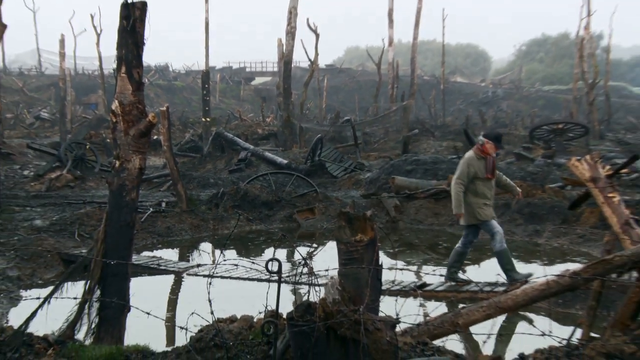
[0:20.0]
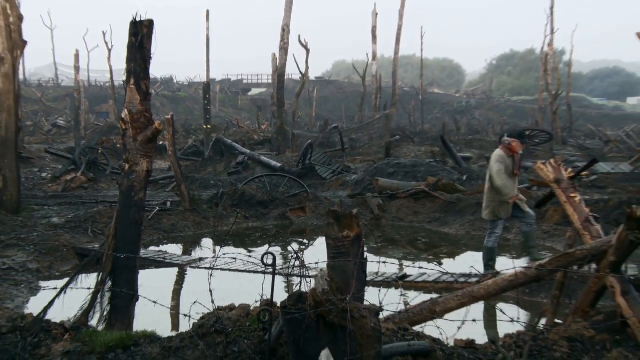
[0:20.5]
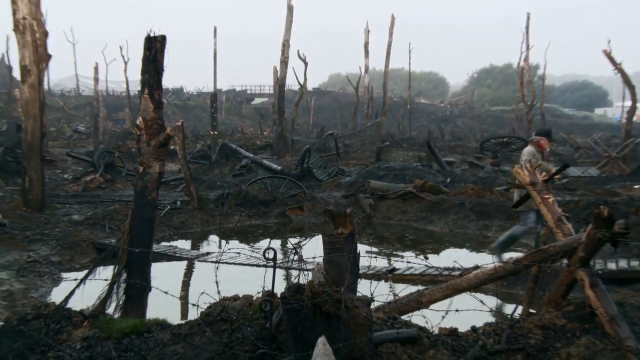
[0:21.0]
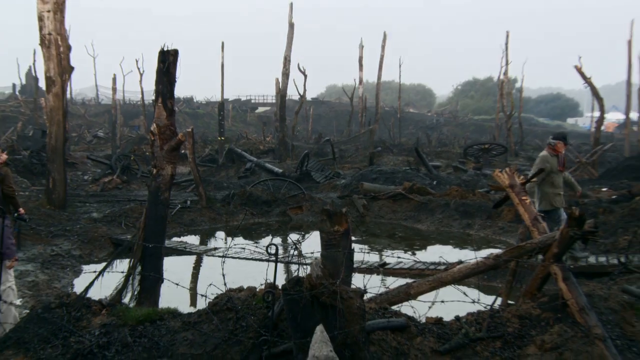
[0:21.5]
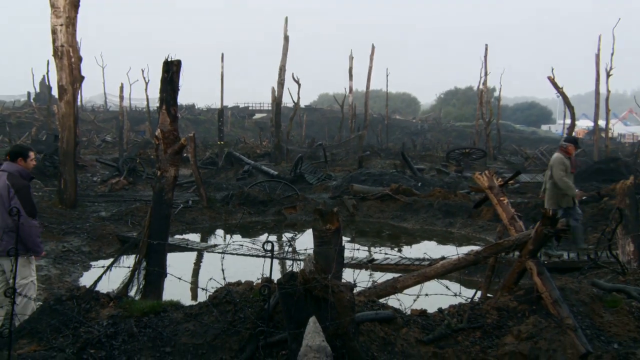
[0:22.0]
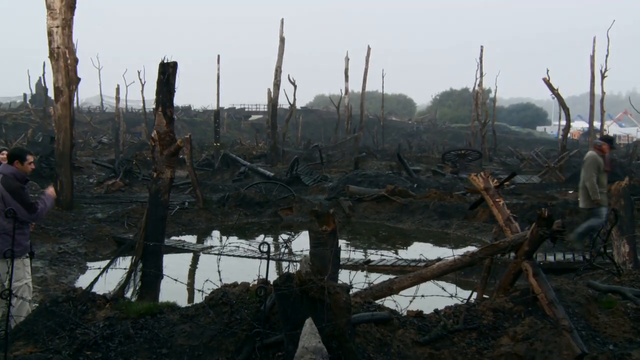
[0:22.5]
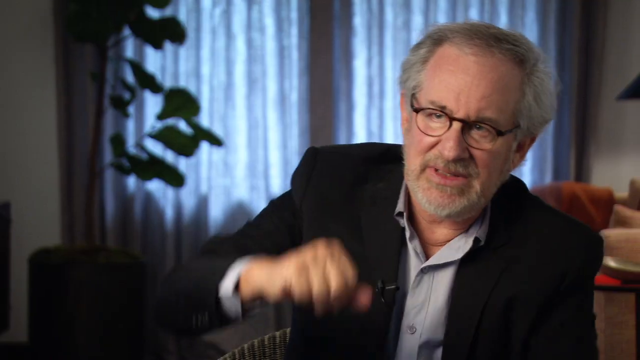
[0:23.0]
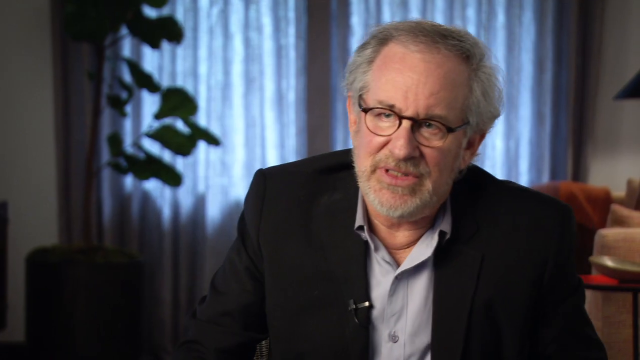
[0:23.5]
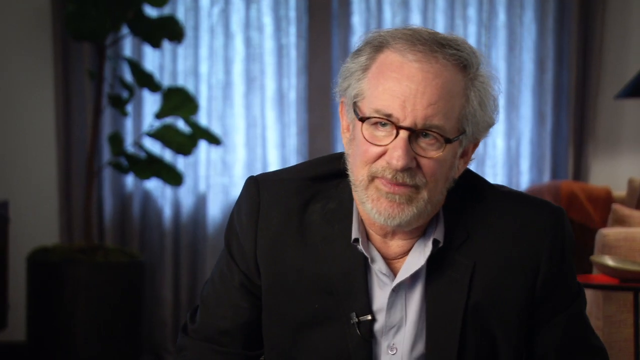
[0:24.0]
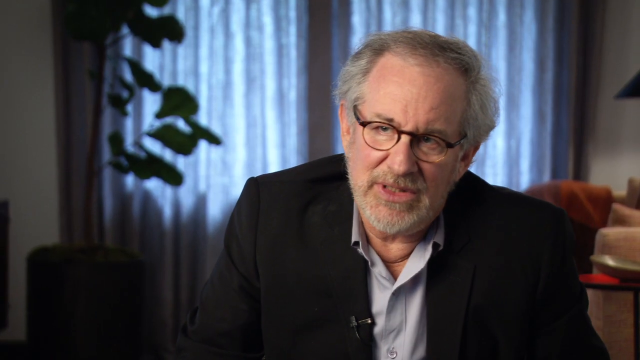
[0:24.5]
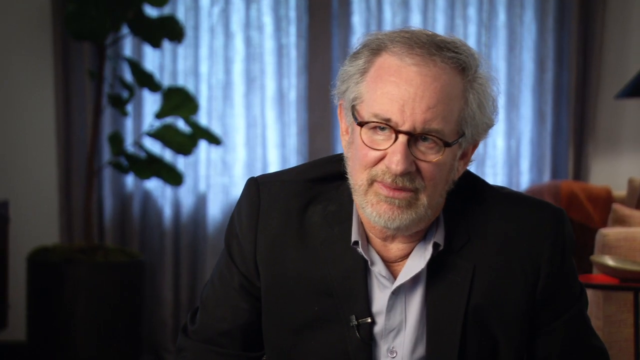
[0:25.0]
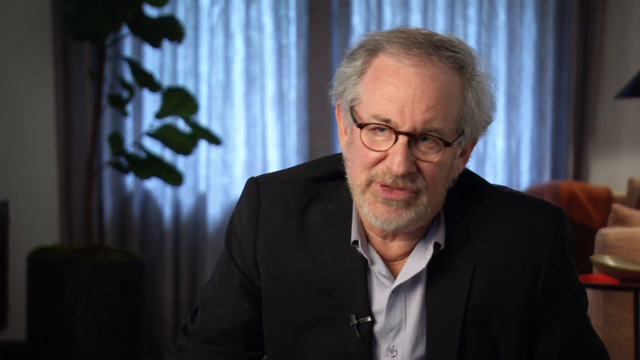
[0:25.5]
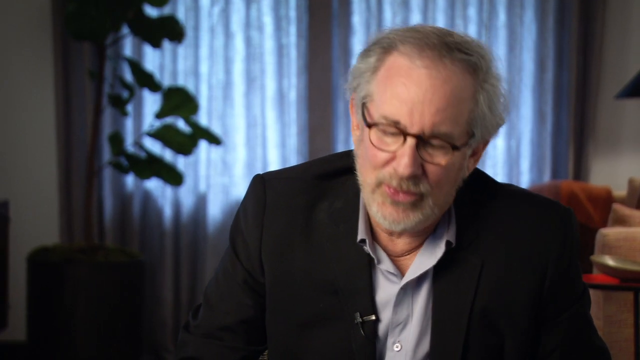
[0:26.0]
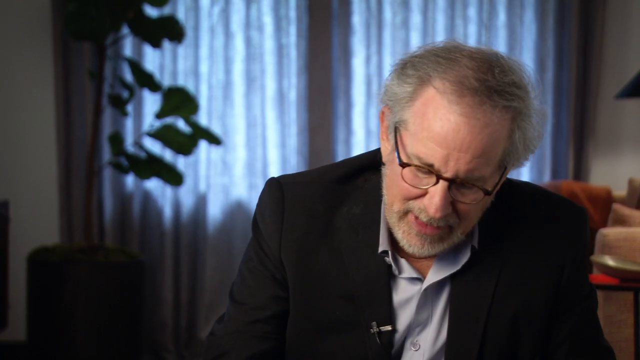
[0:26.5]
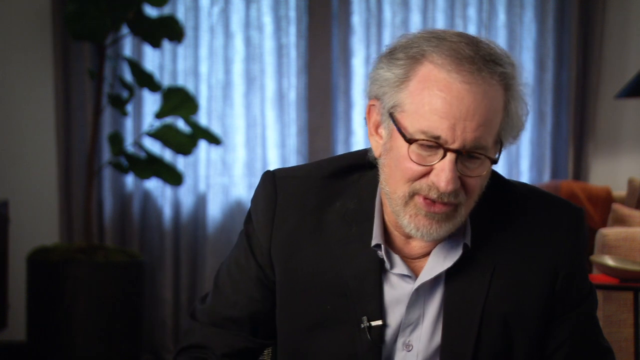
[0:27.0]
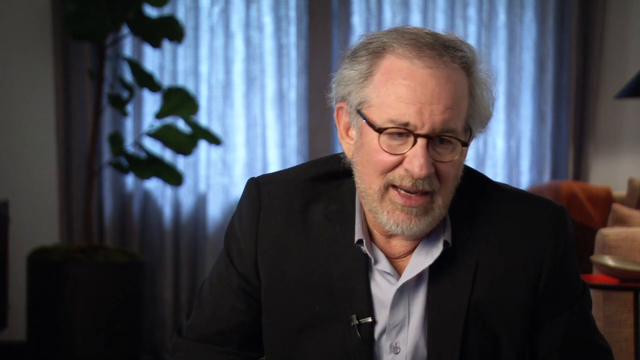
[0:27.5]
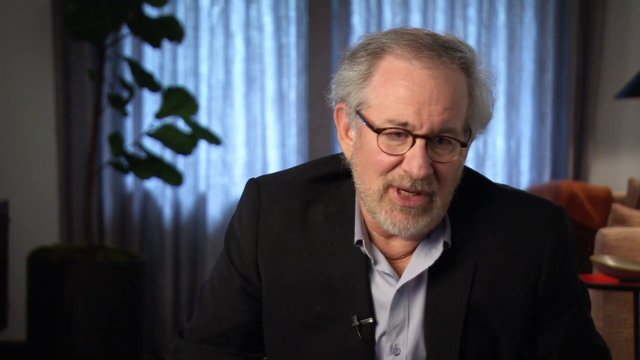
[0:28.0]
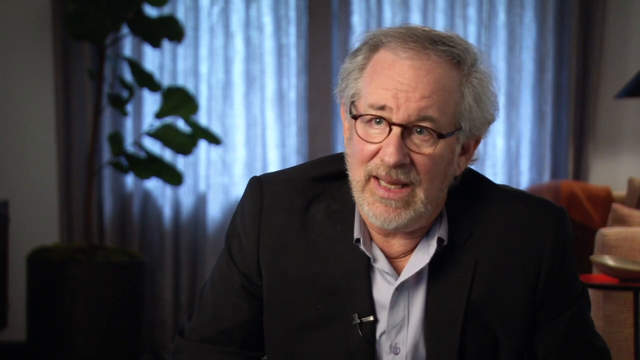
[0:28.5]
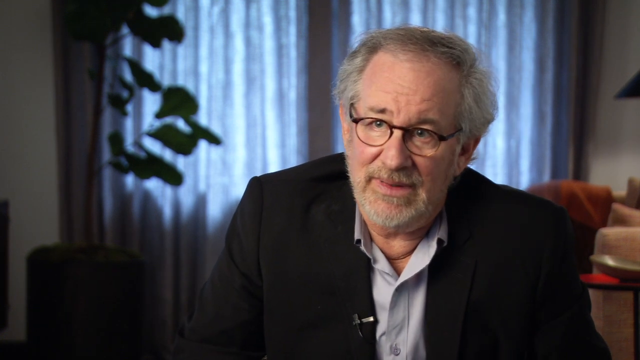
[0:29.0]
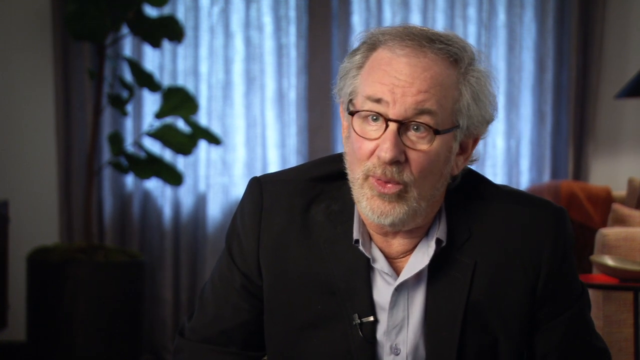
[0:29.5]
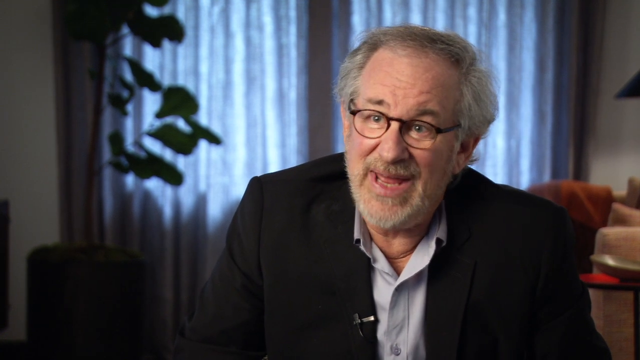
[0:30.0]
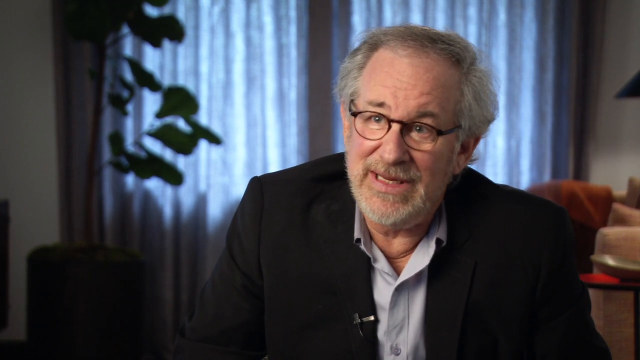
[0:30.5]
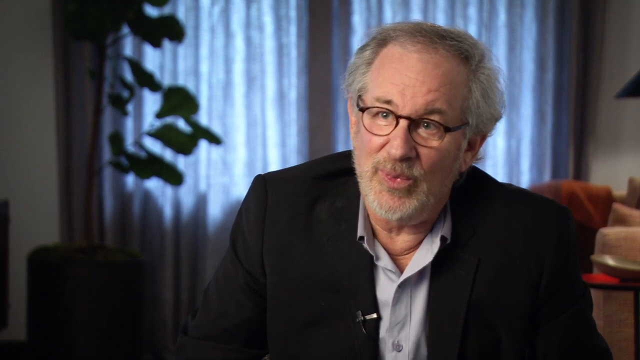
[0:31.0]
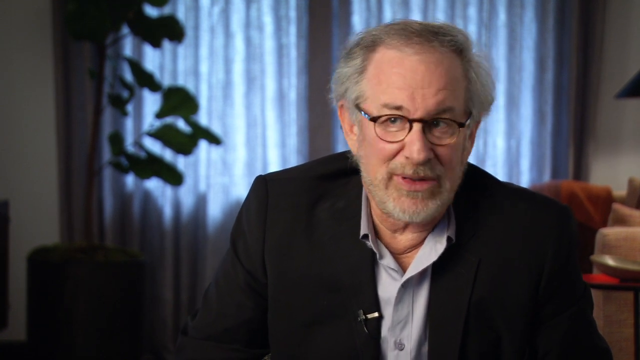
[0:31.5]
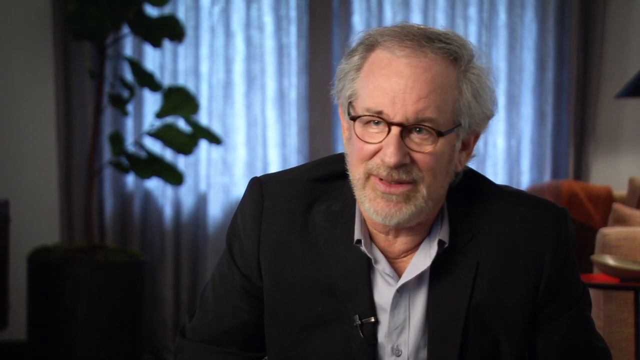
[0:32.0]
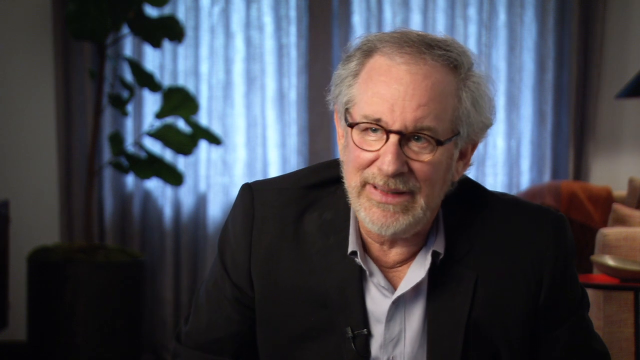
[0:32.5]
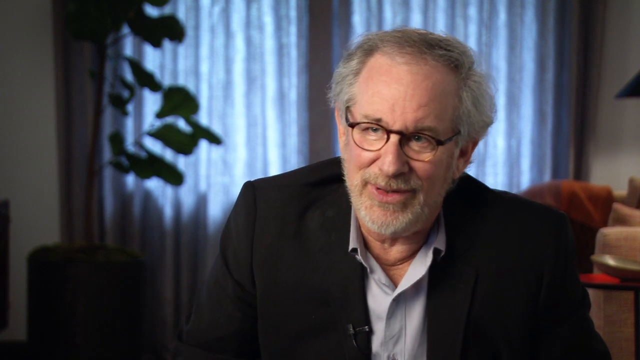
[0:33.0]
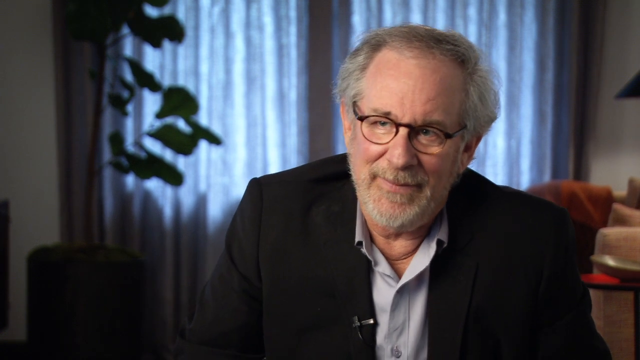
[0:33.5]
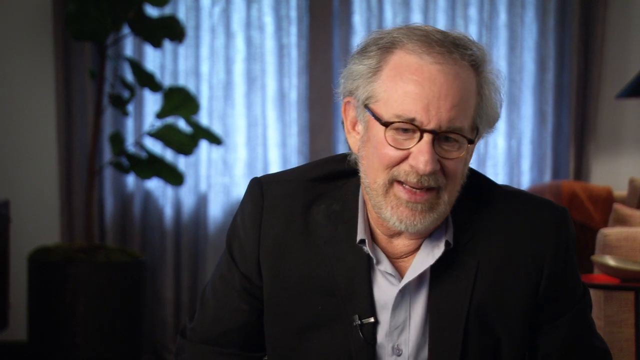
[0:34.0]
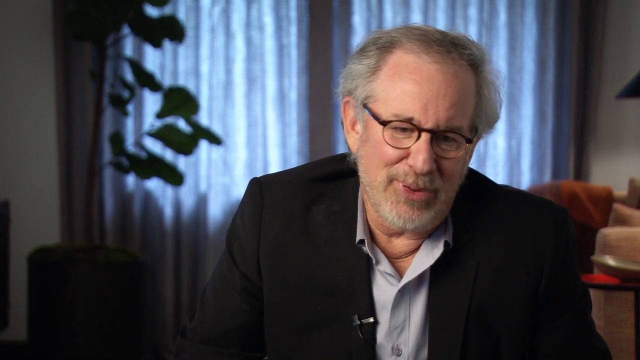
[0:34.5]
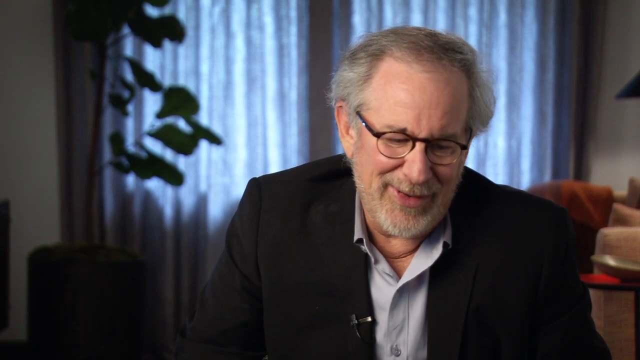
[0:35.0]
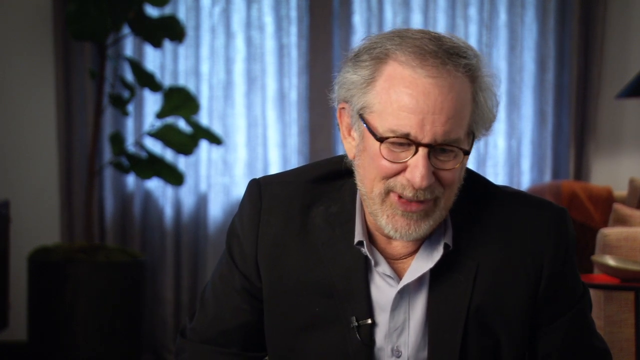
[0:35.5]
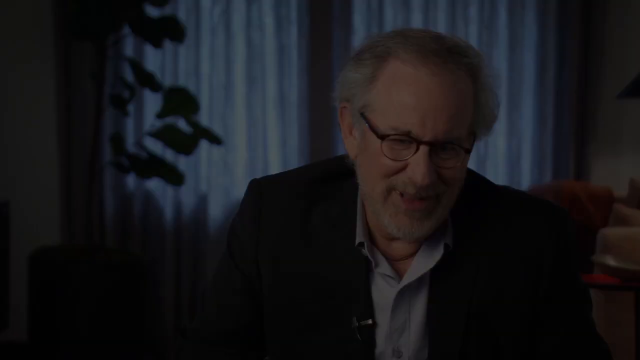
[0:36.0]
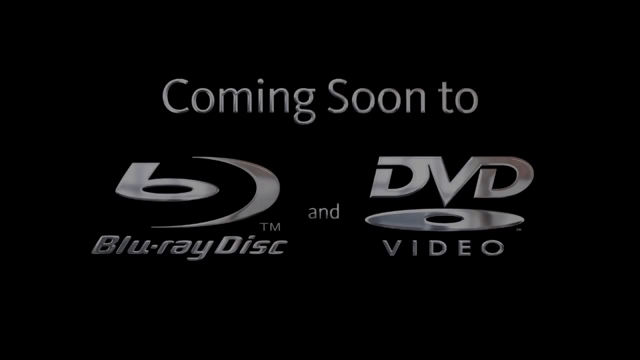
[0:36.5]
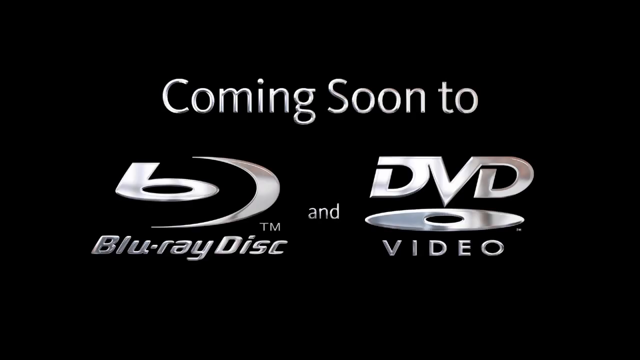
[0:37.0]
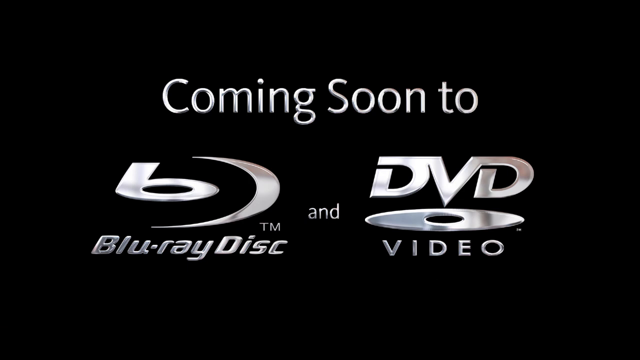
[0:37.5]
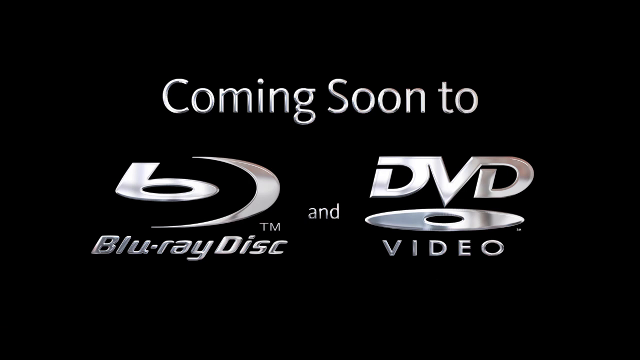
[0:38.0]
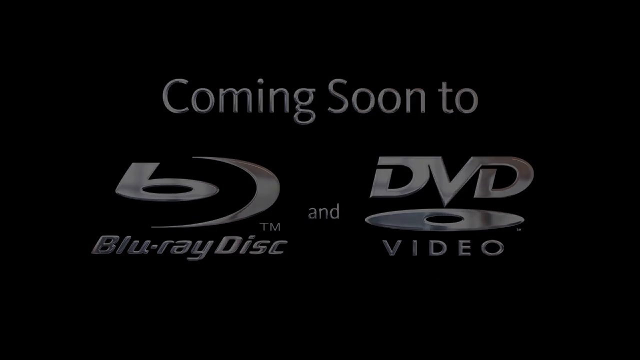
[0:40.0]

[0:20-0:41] This appears to be behind-the-scenes footage from a Spielberg movie. On the right side of the screen, a director who appears to be Spielberg, dressed in an olive-colored jacket, rain boots, a scarf and a baseball cap, walks through the burned-out, muddy wreckage of a fake battle scene. There is barbed wire, a lot of muddy water, and what looks like a small destroyed bridge. The shot cuts to interview footage of him wearing a black dress coat, a blue collared dress shirt, a clipped-on mic and black glasses, with furniture and a plant in the background. Positioned toward the right of the frame, he speaks, looks off to the side a little and looks down, occasionally glancing at what could possibly be an interviewer off-camera, with various expressions crossing his face as he keeps looking down and back up. It then cuts to a black screen with centered silver text reading "coming soon to Blu-ray disc and DVD video," which holds for a while before the video cuts out.